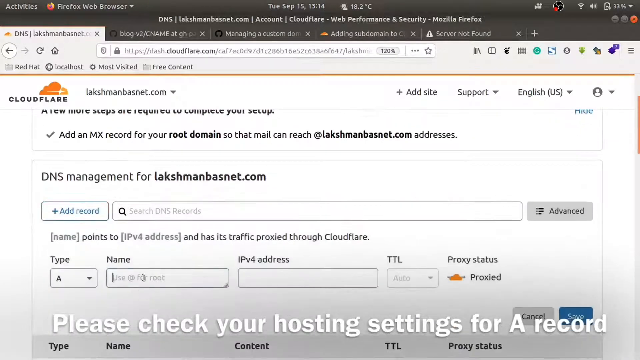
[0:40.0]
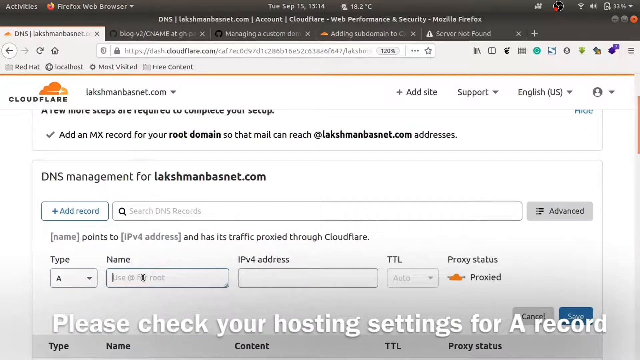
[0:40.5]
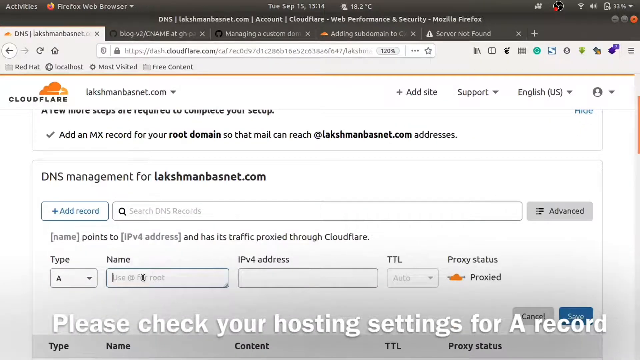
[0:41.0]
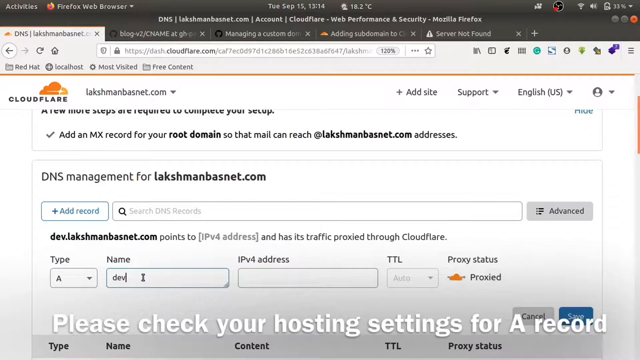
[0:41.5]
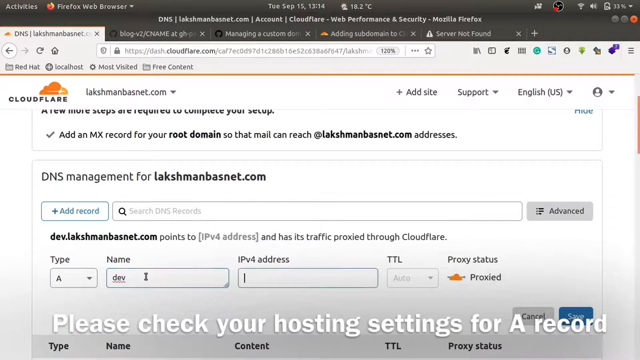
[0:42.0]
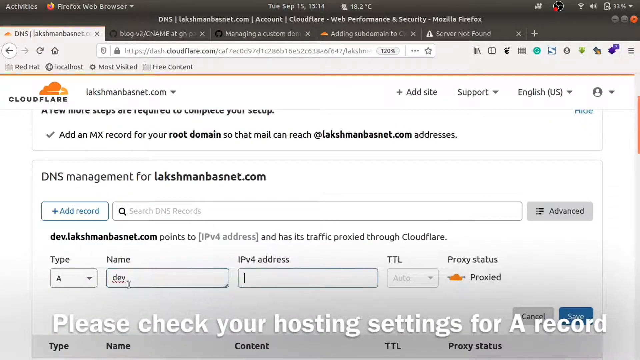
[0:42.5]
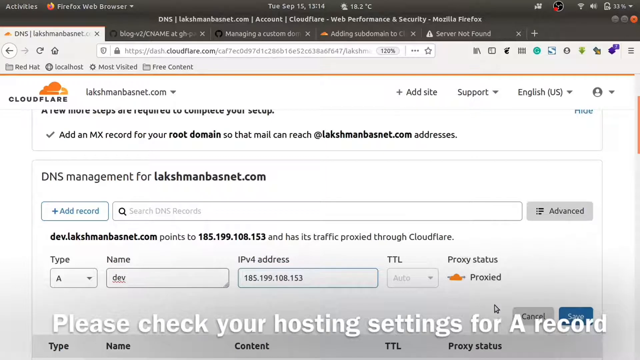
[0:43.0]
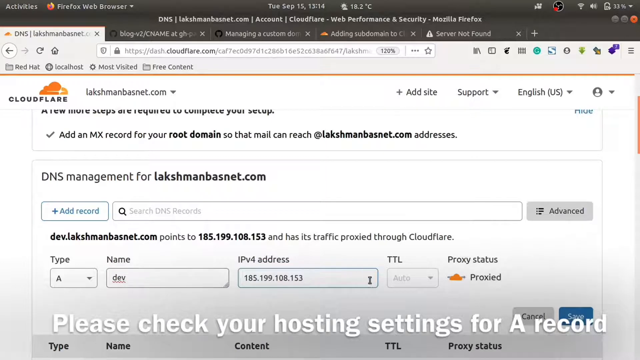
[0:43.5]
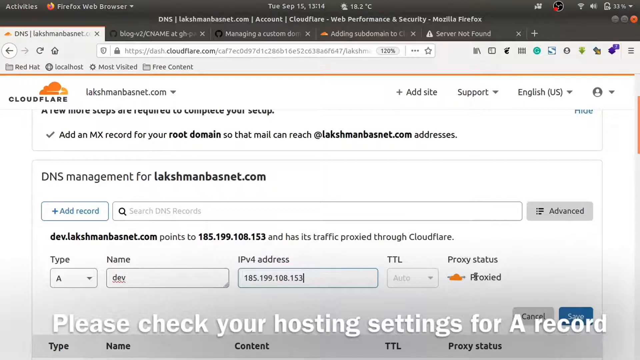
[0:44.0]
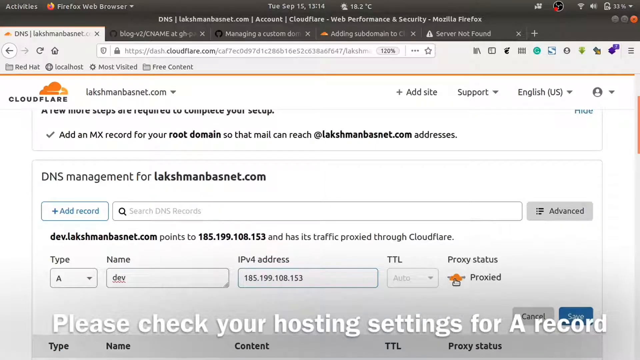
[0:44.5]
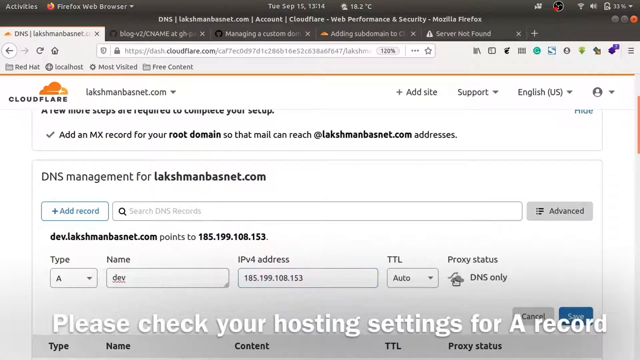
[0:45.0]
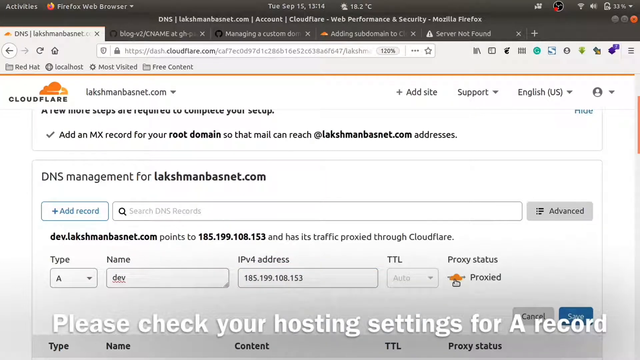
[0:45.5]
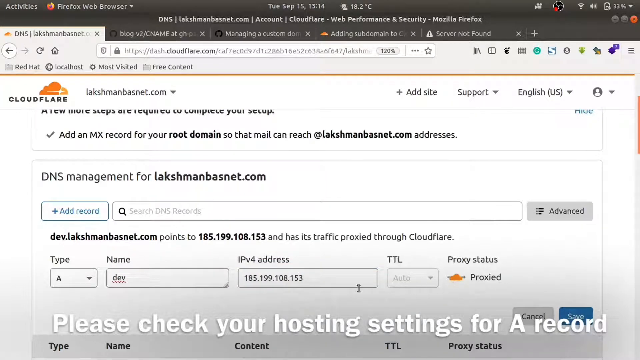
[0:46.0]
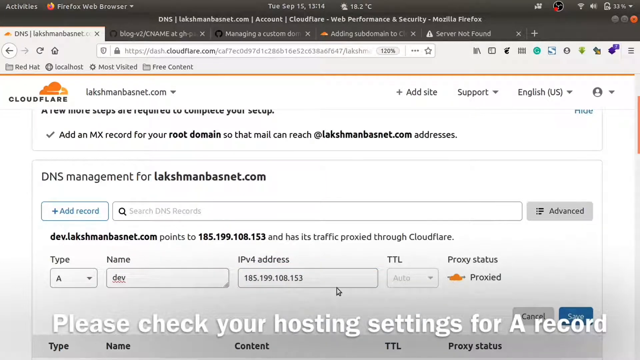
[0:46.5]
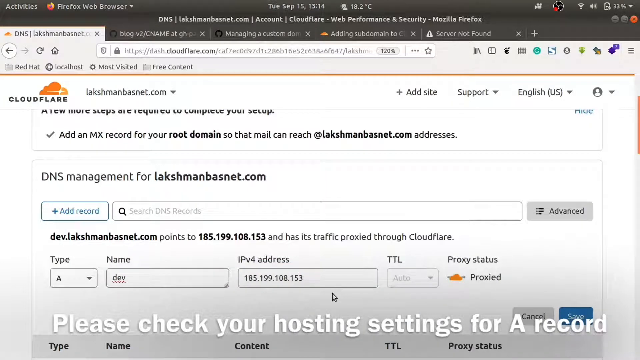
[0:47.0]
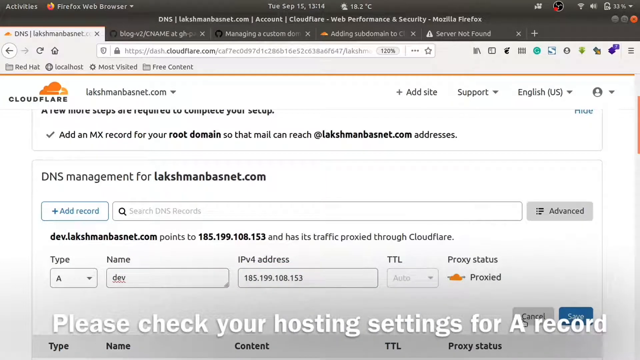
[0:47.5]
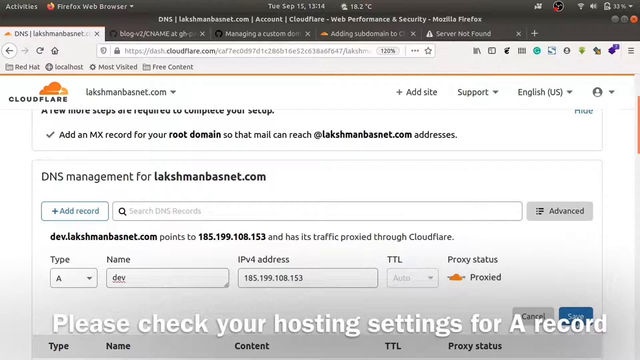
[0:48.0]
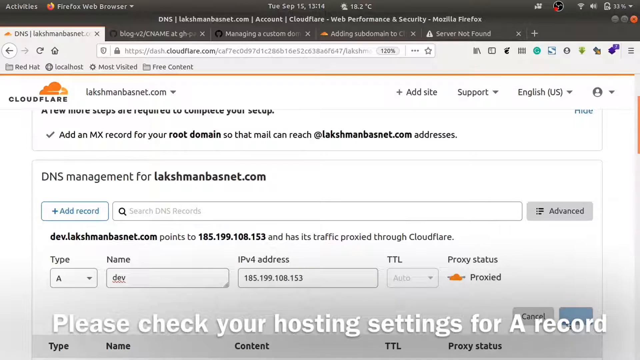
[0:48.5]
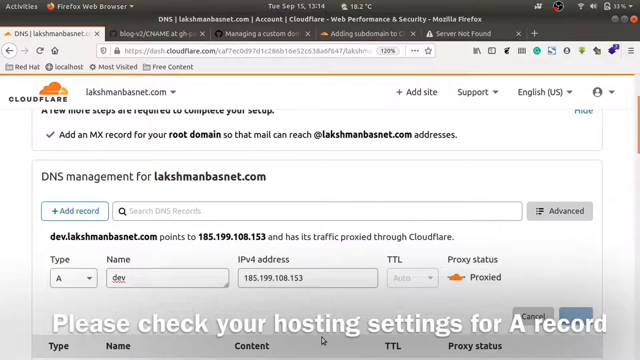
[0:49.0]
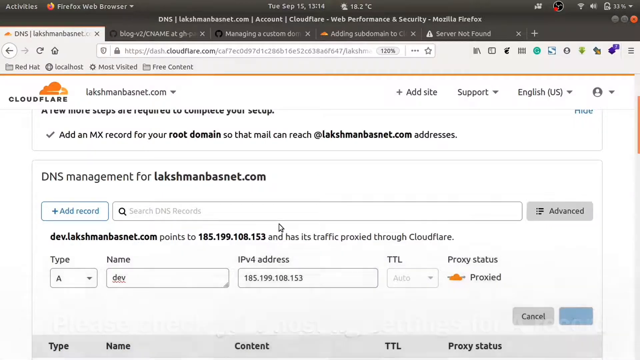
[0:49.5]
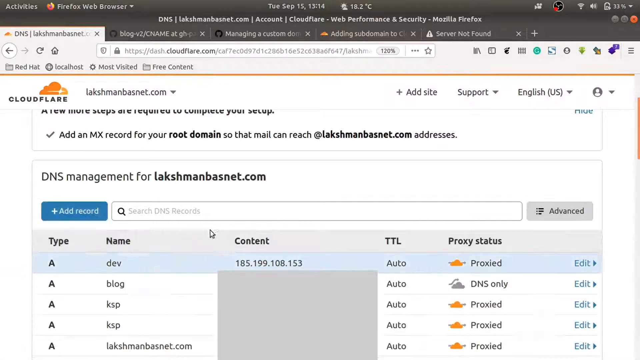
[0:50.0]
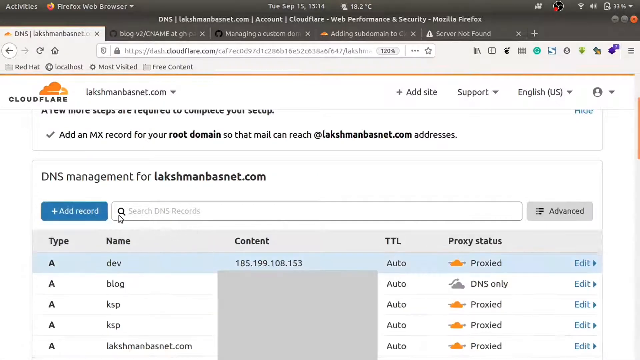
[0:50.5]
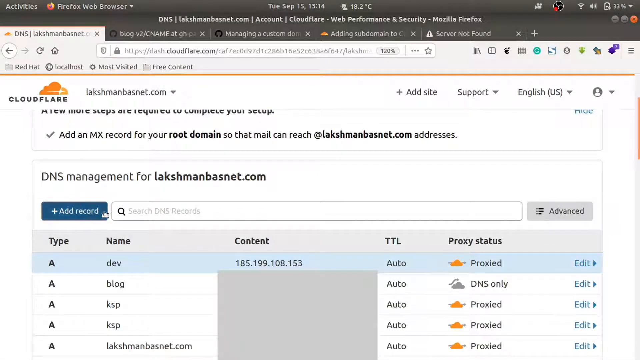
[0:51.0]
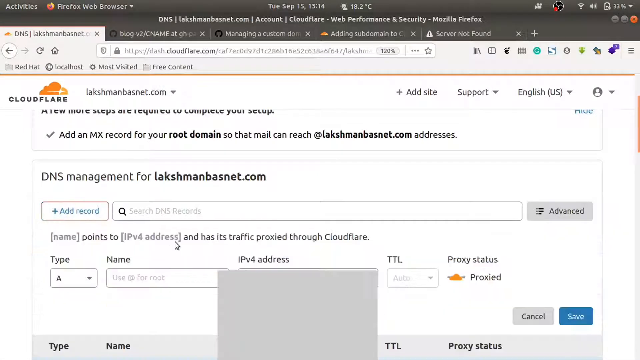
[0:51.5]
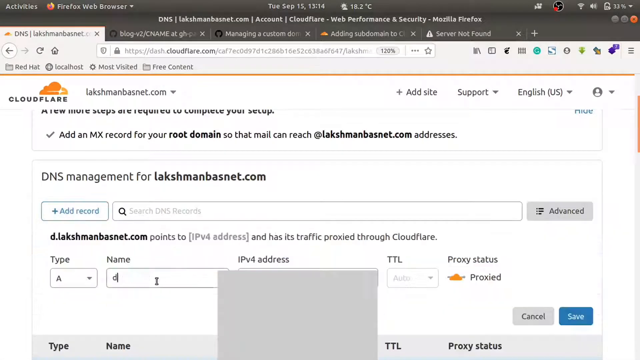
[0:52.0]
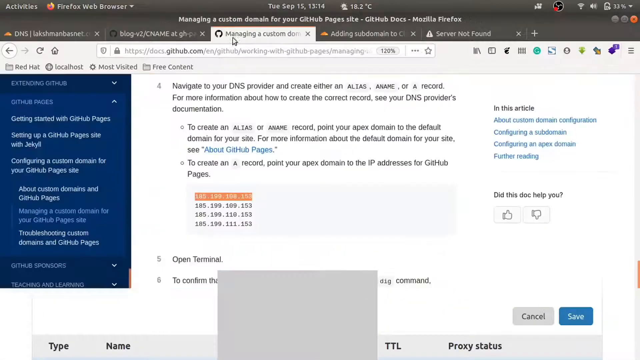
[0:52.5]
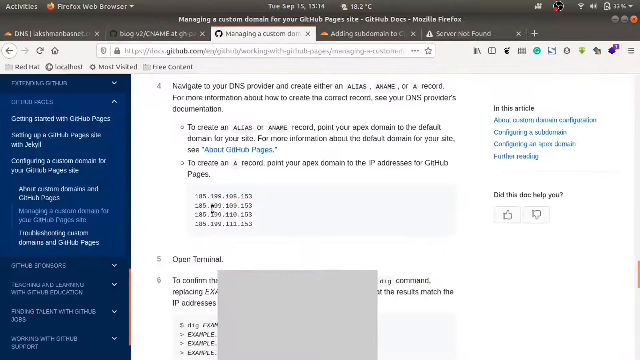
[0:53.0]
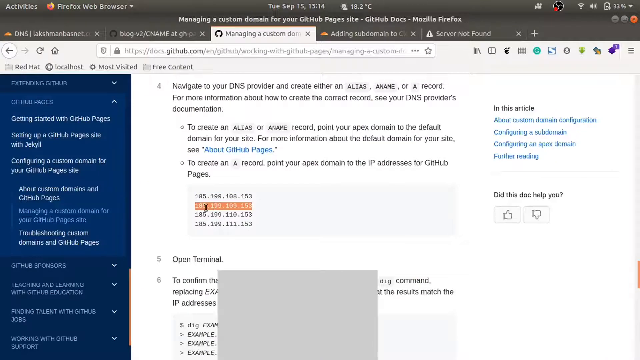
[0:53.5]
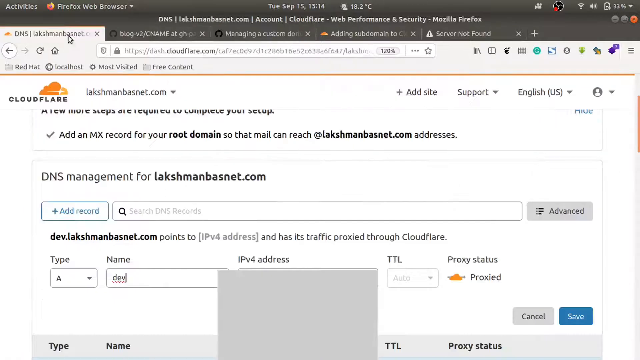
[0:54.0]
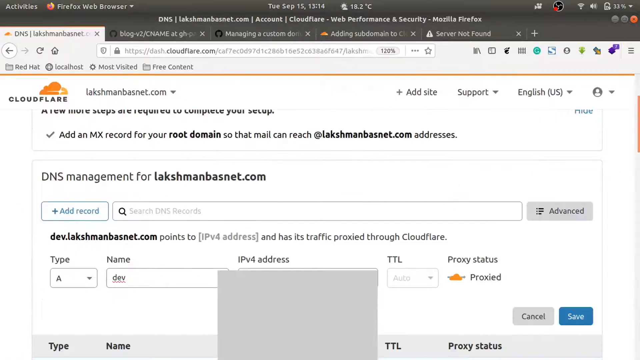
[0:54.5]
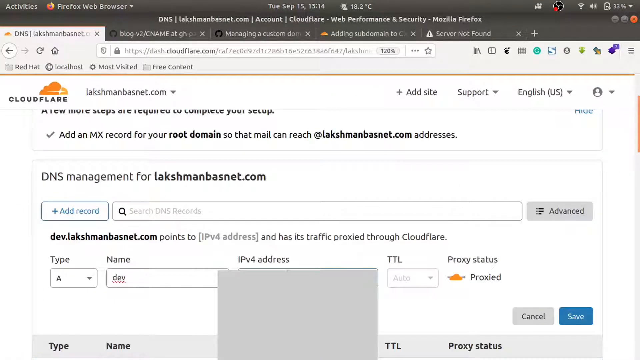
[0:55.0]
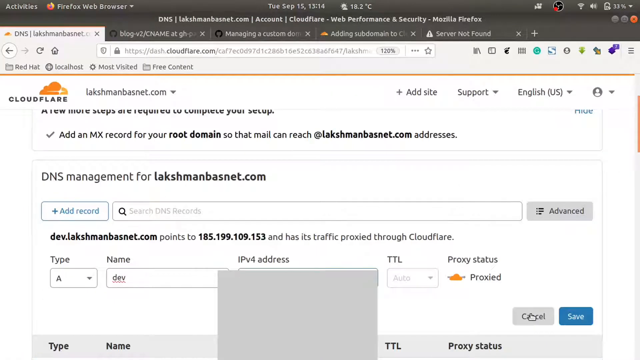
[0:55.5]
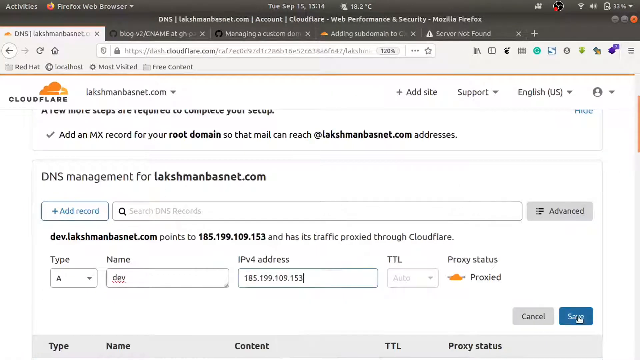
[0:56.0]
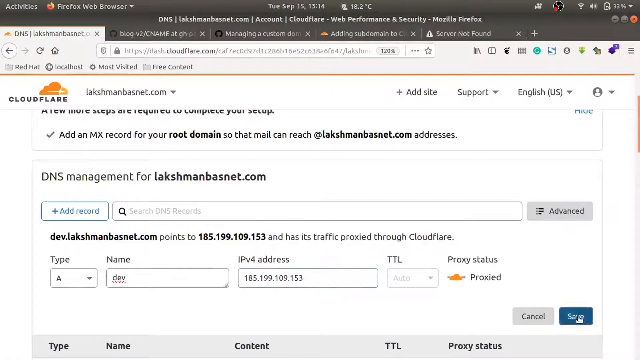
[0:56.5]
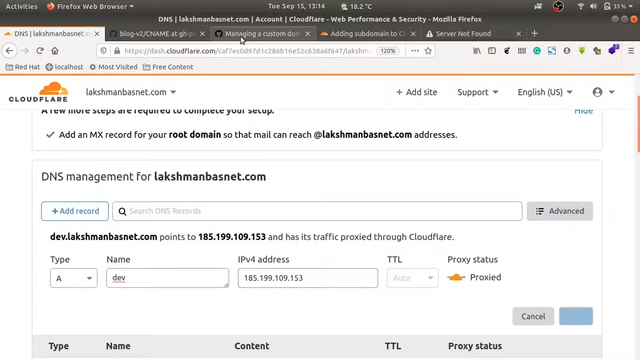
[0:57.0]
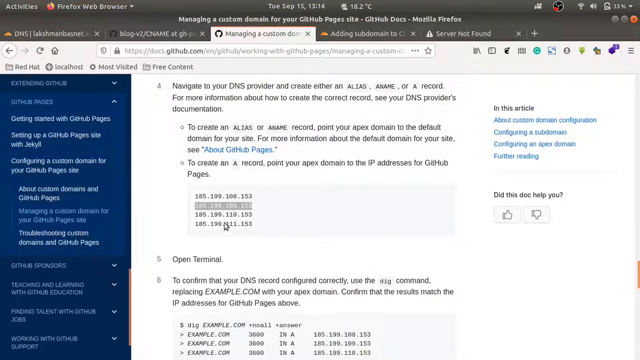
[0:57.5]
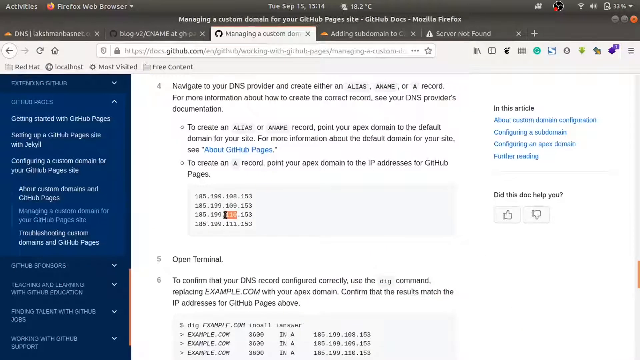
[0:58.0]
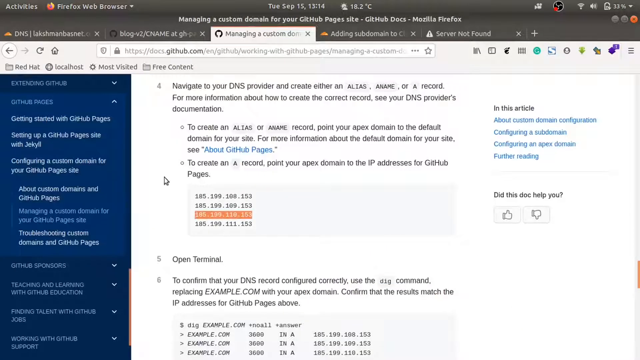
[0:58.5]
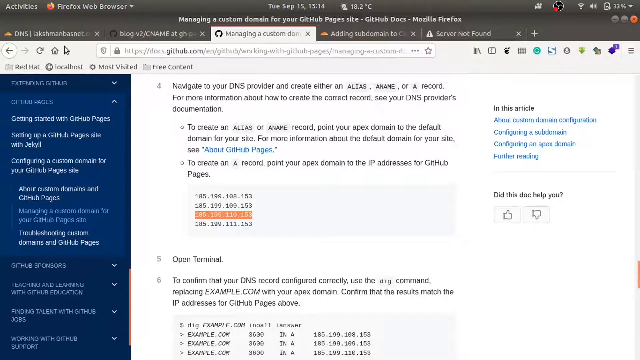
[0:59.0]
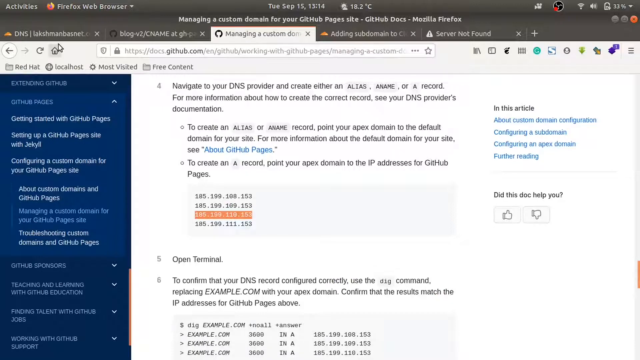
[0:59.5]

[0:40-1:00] He is in DNS management for lakshmanbasnet.com on the Cloudflare site. Text says the name points to an IPv4 address and has traffic proxied through Cloudflare. He types "dev" into the name field and pastes an IPv4 address into the IPv4 address field; the type is A, it is proxied, and the TTL is auto. He adds the record, then clicks add record again and enters the name and the second address from GitHub; the third one is basically the same. The Cloudflare DNS management page has many options, such as support and changing the language. On GitHub, a page about GitHub Pages says "To create a record, point to your Apex domain", and four IP addresses are listed along with a command section labelled "open terminal". Text there reads "replacing example.com with your Apex domain. Confirm that the results match the IP address for GitHub pages above."